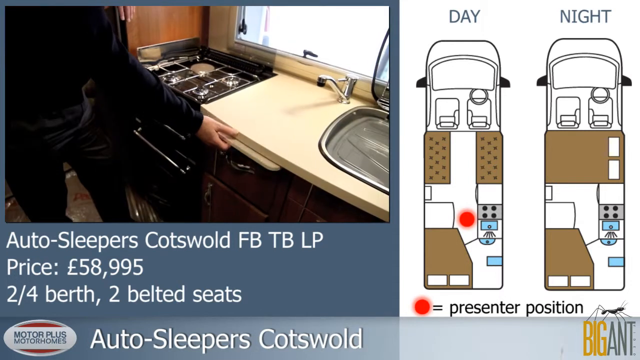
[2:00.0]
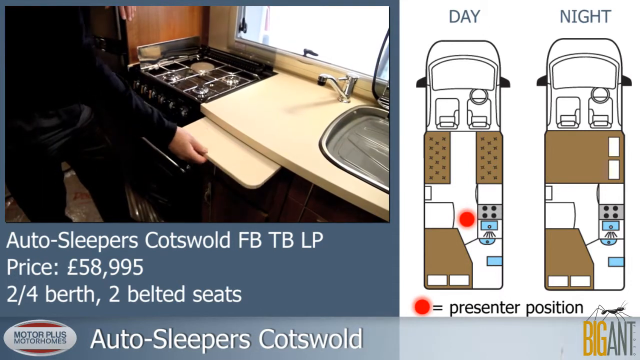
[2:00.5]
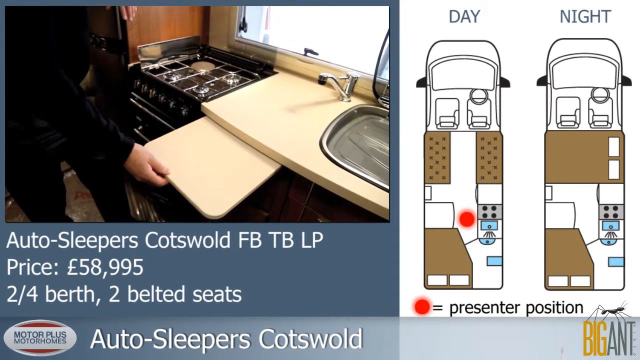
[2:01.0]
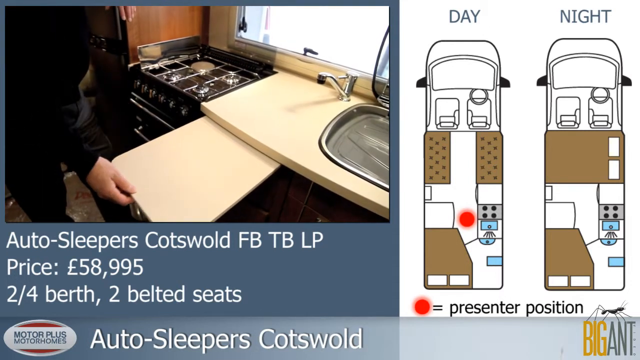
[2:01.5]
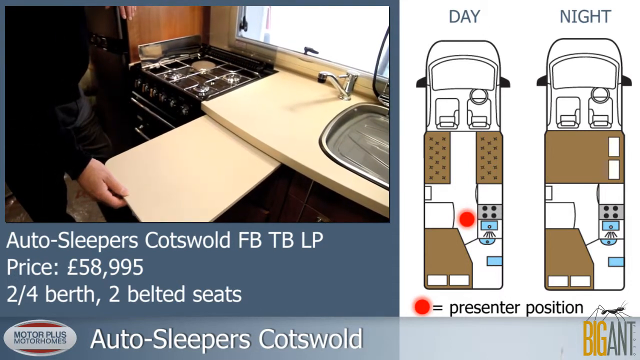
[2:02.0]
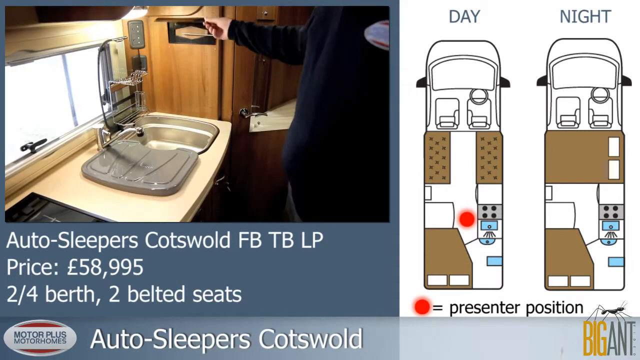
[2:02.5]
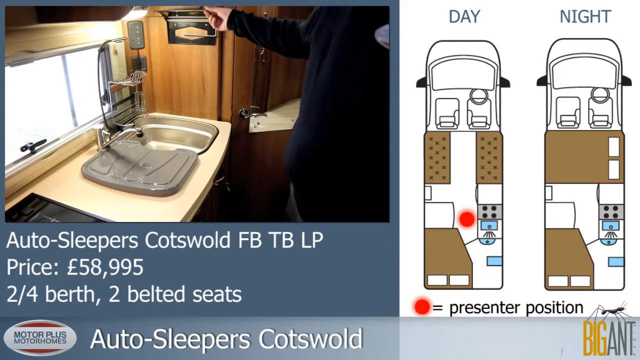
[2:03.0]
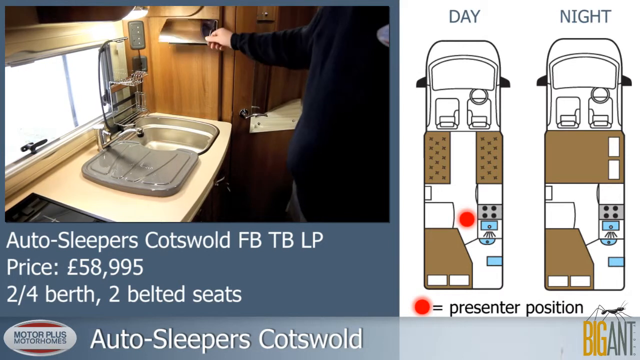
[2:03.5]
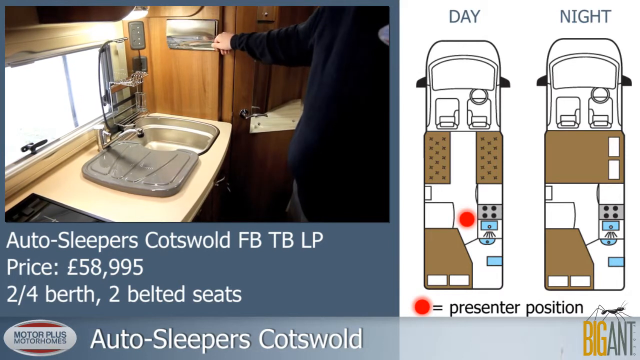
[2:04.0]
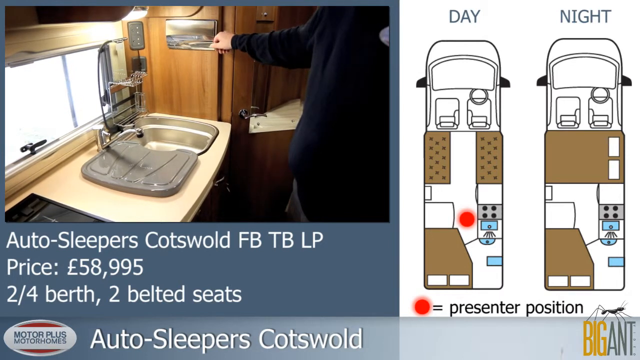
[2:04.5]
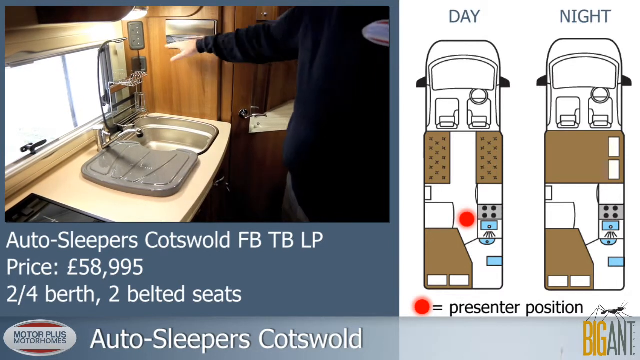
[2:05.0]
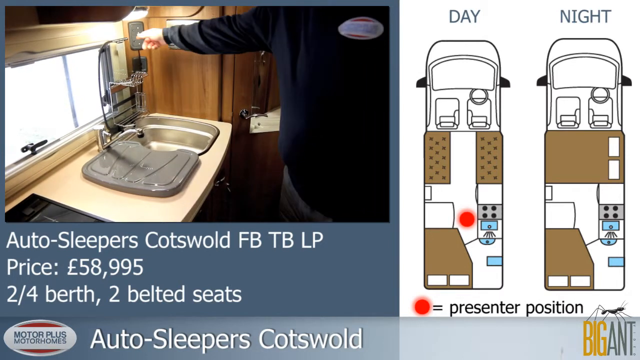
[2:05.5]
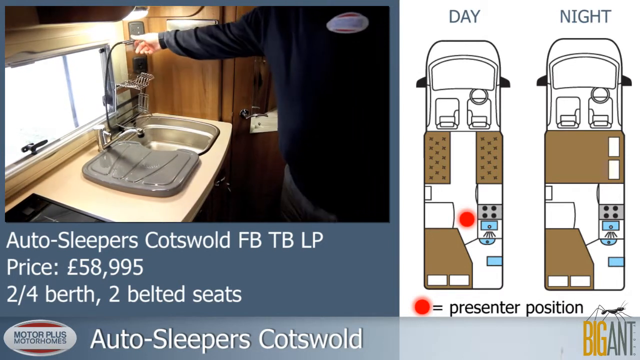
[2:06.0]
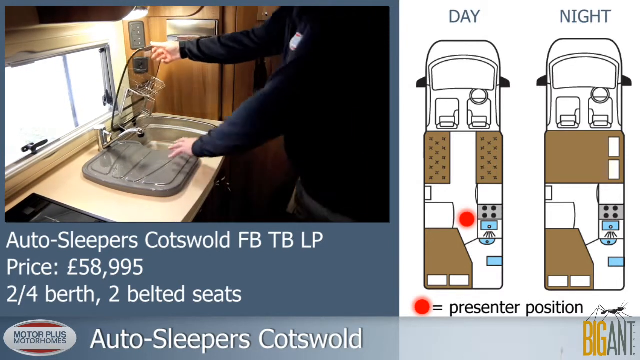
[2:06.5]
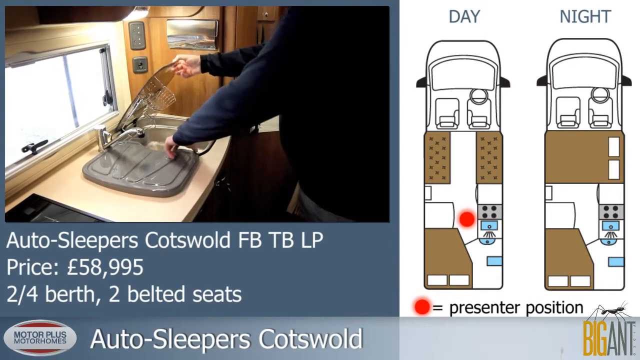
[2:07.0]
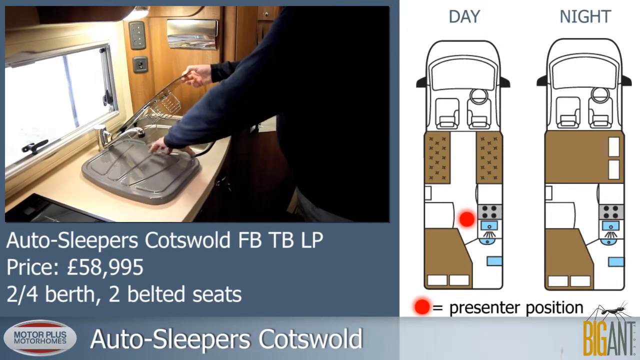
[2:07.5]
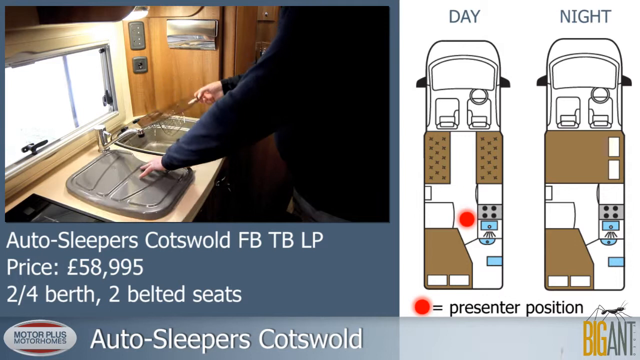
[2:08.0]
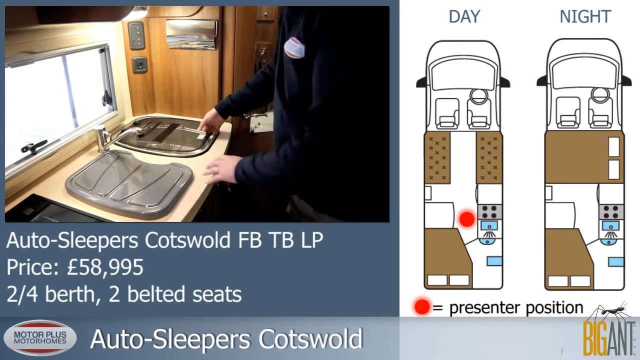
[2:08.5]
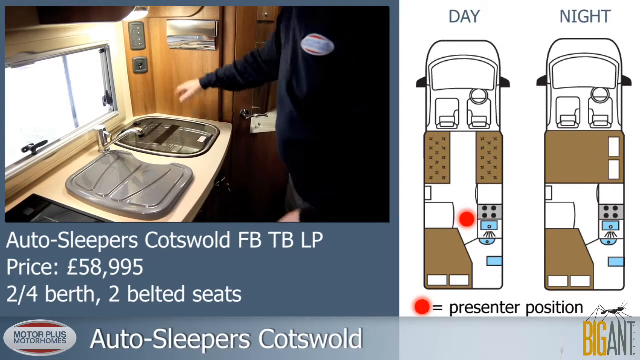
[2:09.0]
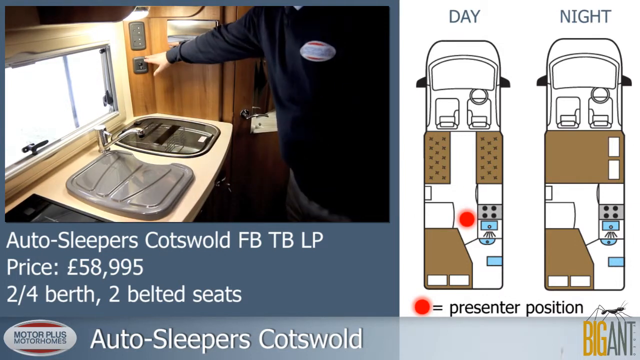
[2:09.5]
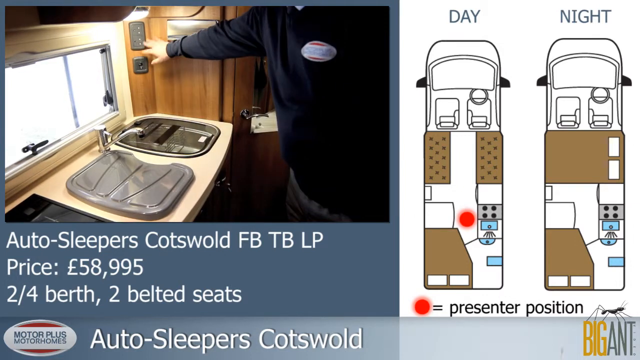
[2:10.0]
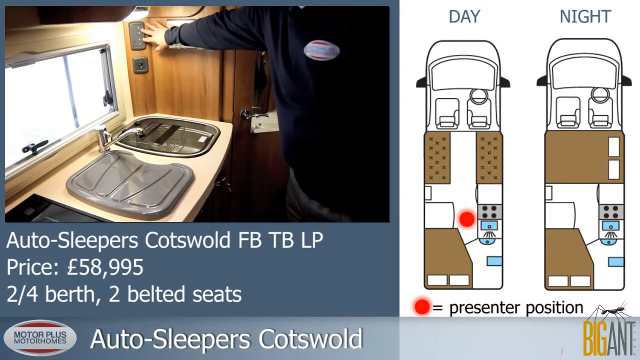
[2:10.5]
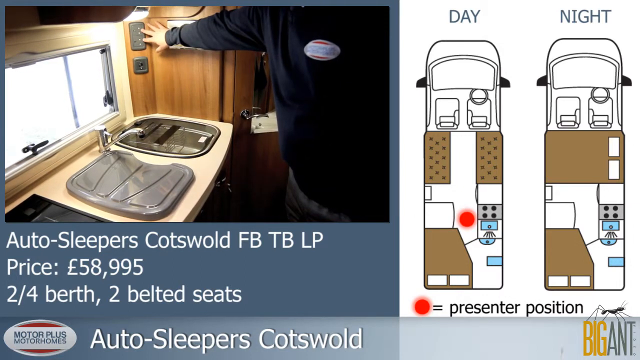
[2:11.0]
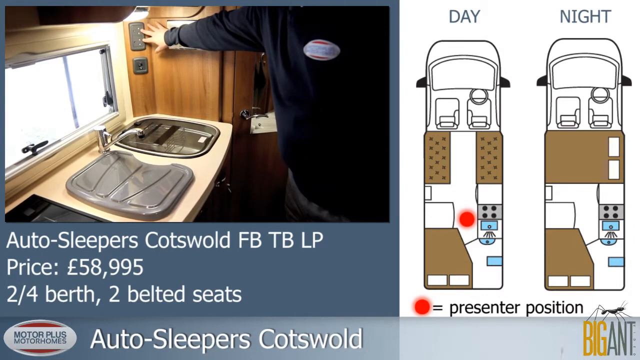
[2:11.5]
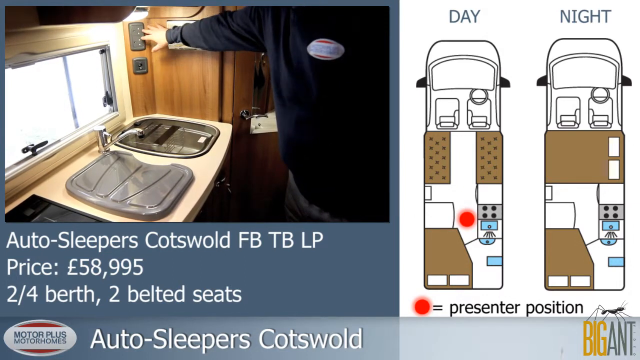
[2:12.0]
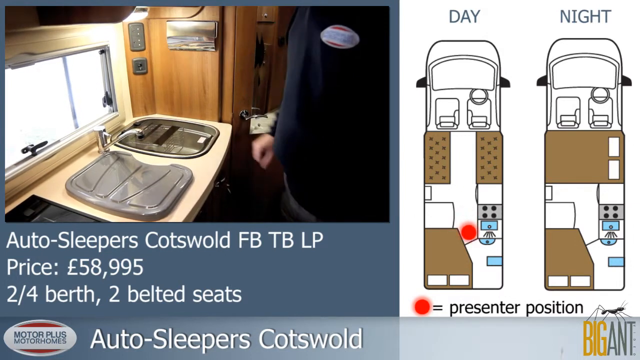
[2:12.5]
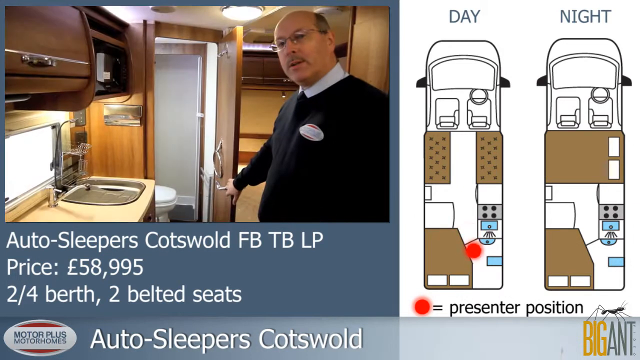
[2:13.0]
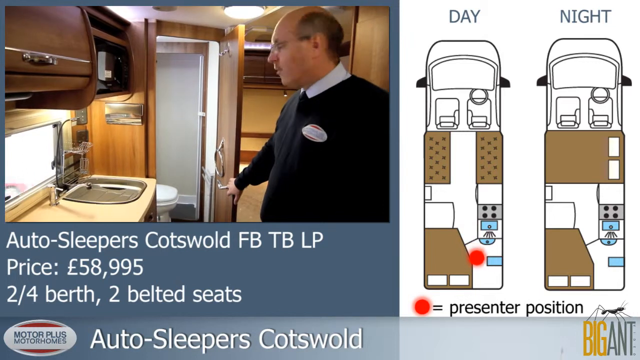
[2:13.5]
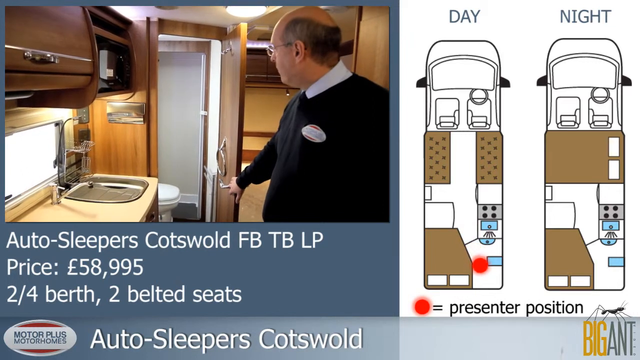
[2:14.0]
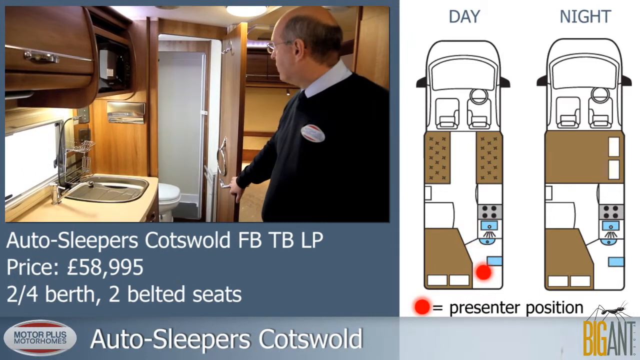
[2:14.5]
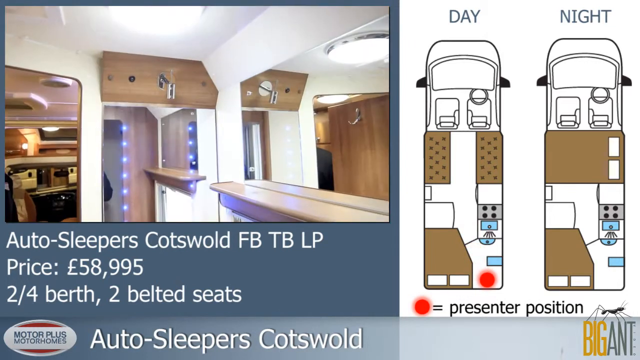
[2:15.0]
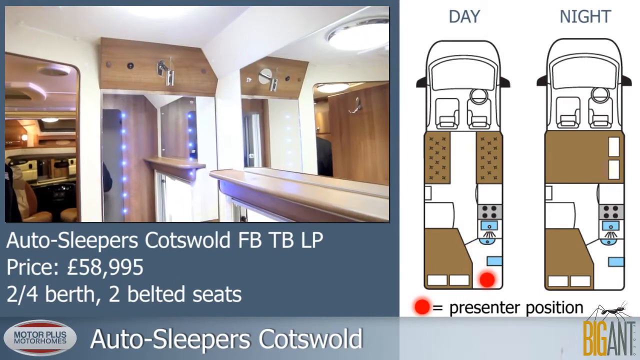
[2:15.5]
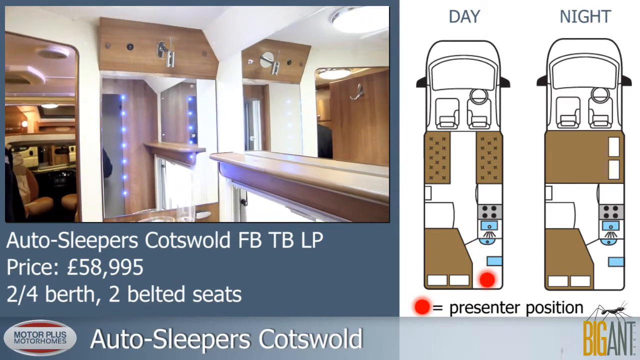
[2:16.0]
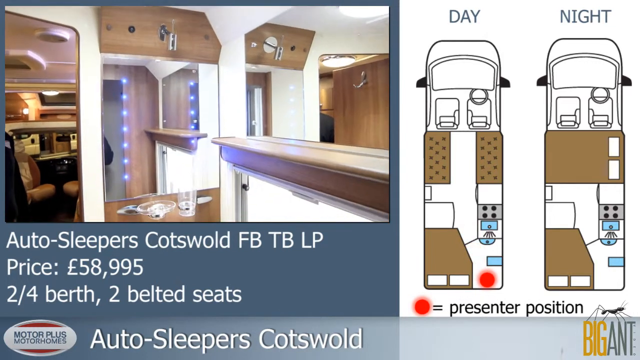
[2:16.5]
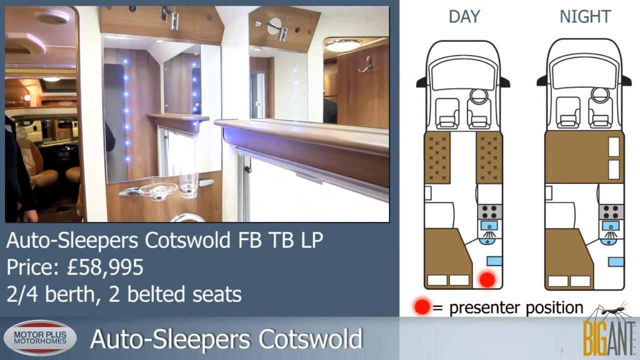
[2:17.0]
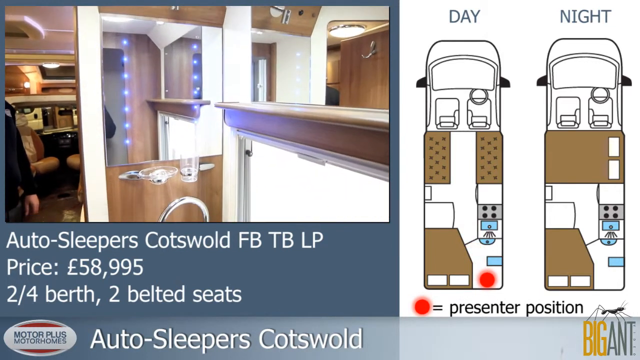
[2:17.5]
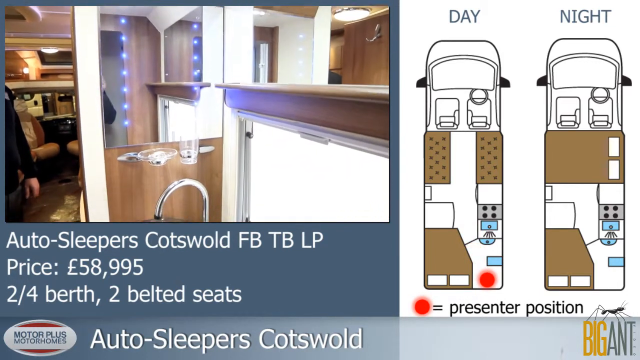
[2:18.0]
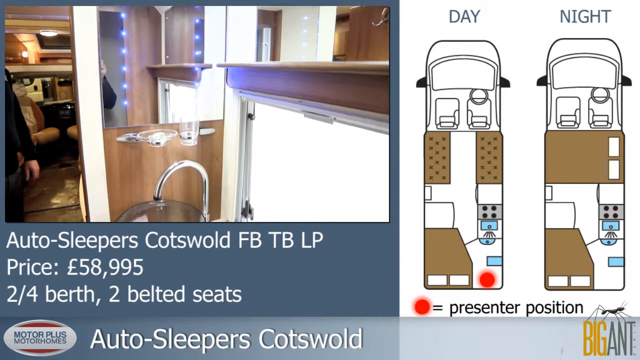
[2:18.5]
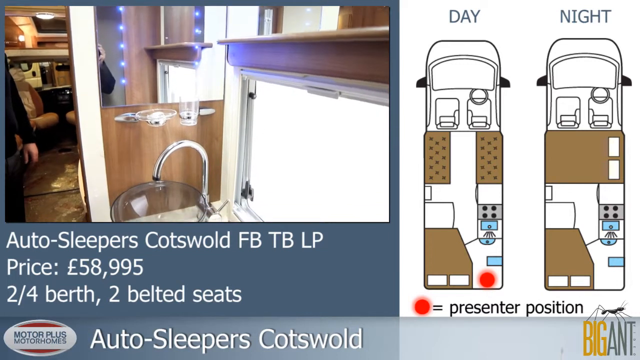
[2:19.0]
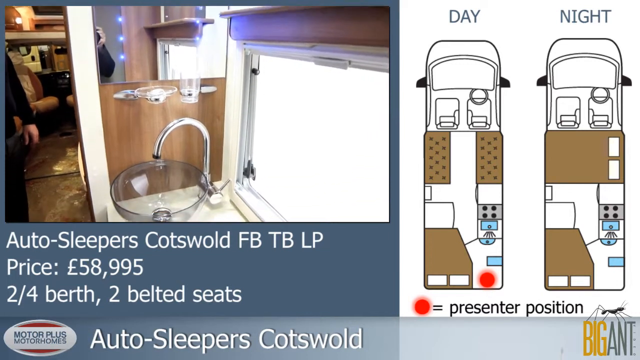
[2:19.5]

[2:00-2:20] In the kitchen area, the salesman pulls out what appears to be a chopping board or workstation. He shows the sink, which has a cover that can be pulled down. The chopping board moves to the side, and he shows the light switches and plug sockets. At the back of the kitchenette there is a toilet concealed by a door, with a white toilet bowl visible. Finally a washing area is shown, with mugs and glasses on the side, a well-lit mirror and another tap.